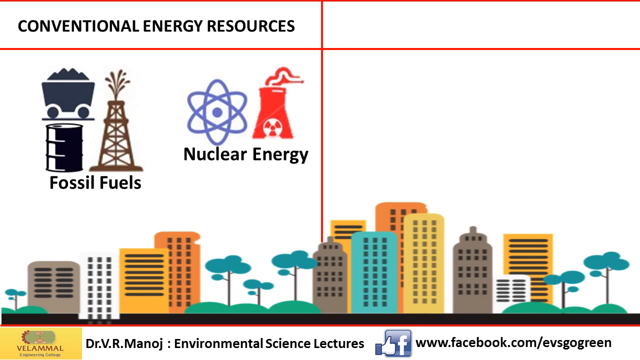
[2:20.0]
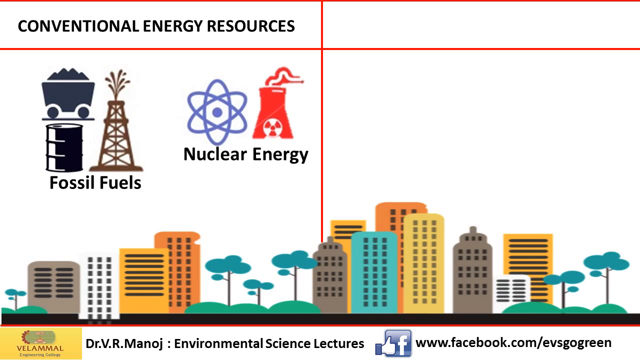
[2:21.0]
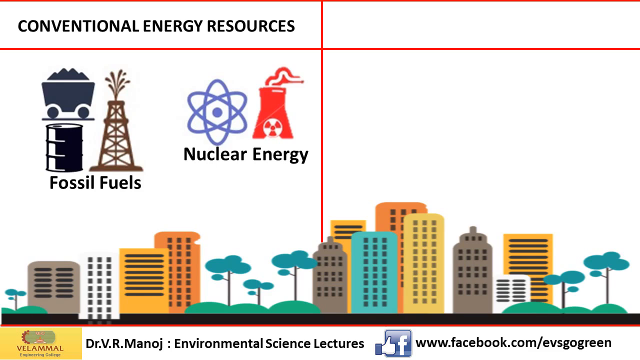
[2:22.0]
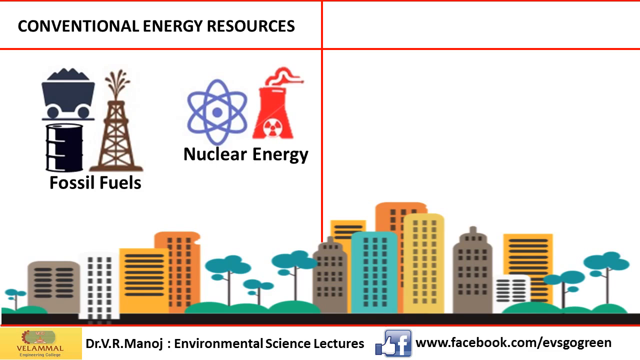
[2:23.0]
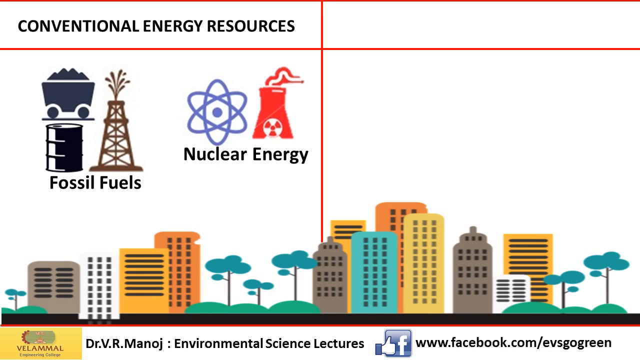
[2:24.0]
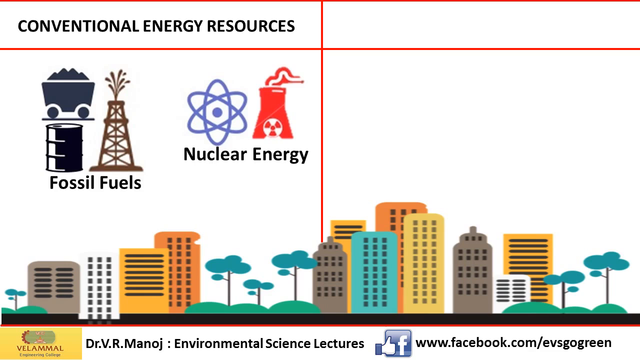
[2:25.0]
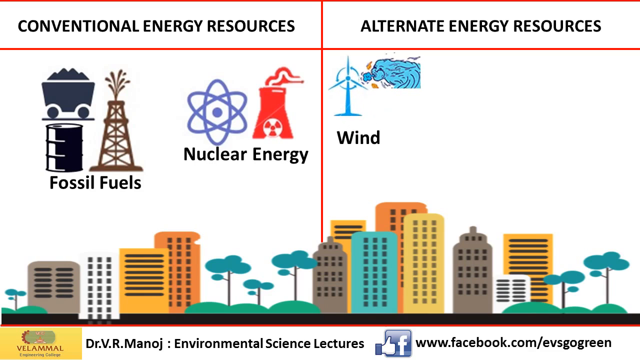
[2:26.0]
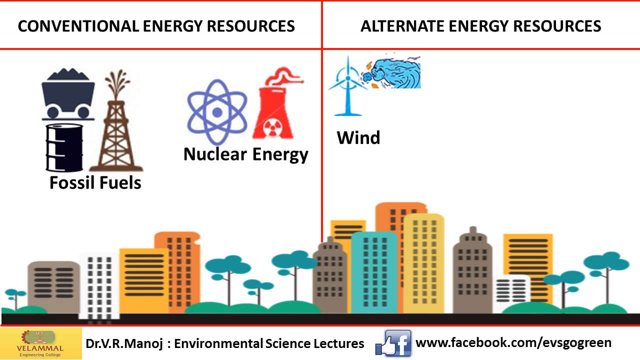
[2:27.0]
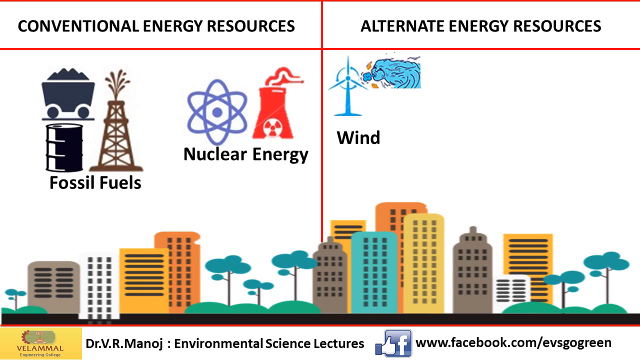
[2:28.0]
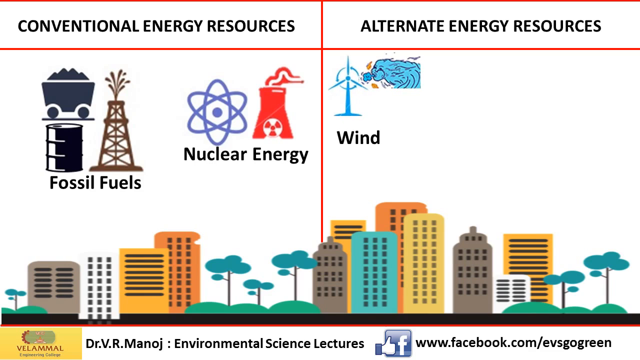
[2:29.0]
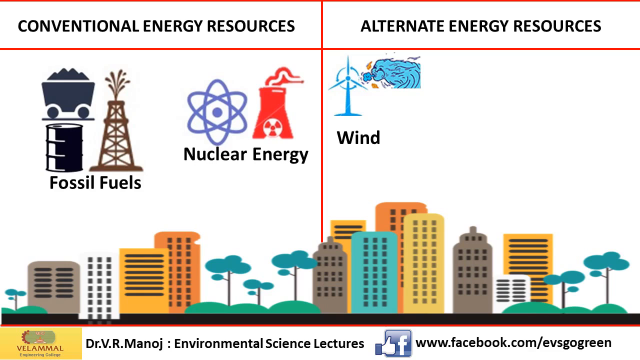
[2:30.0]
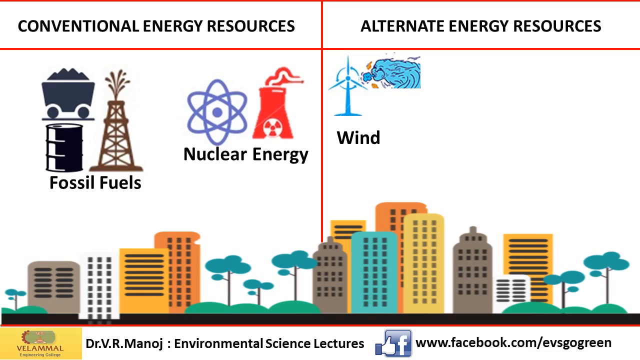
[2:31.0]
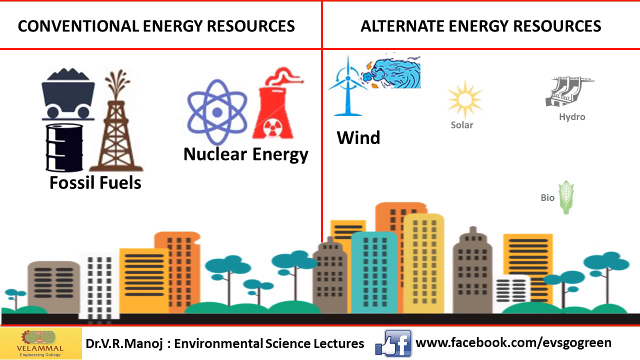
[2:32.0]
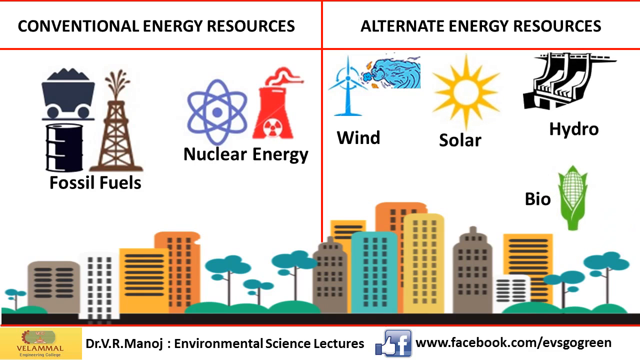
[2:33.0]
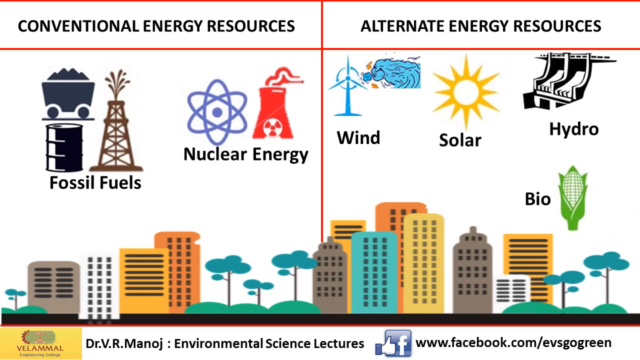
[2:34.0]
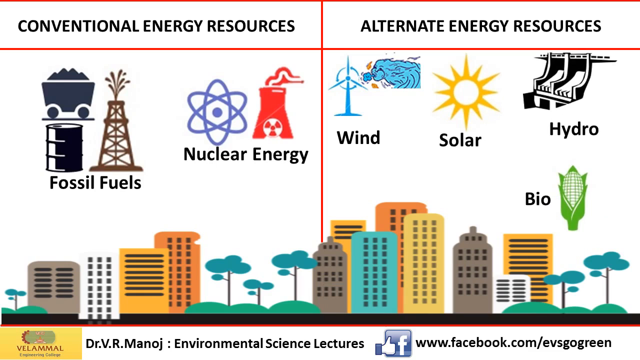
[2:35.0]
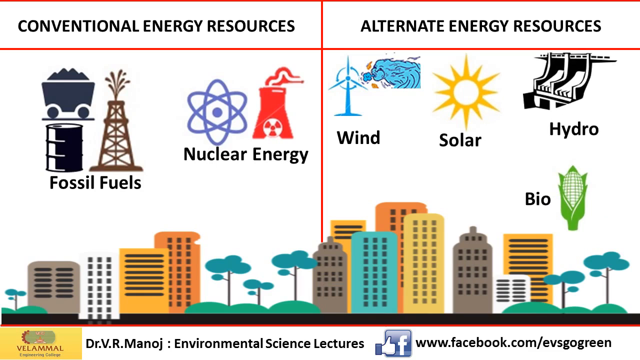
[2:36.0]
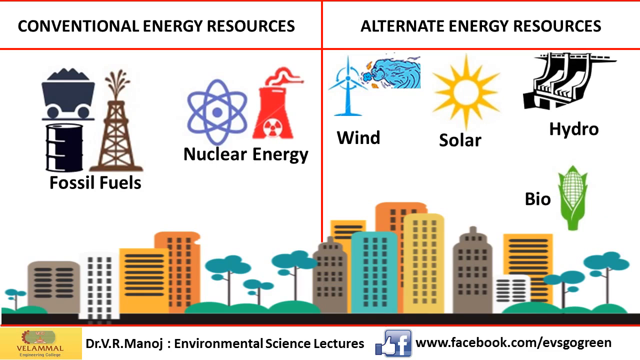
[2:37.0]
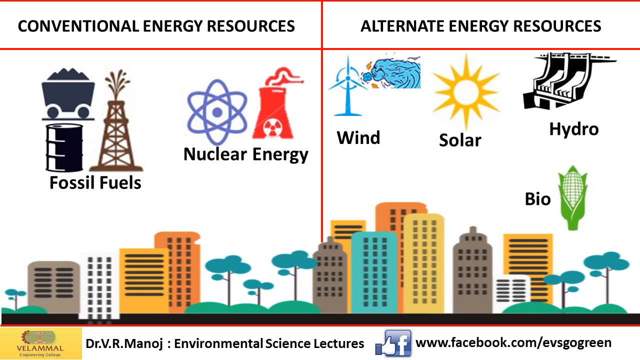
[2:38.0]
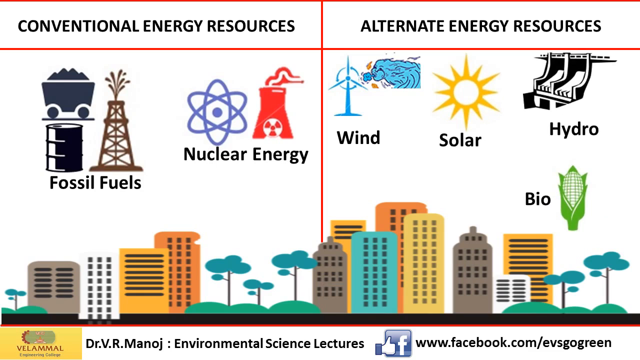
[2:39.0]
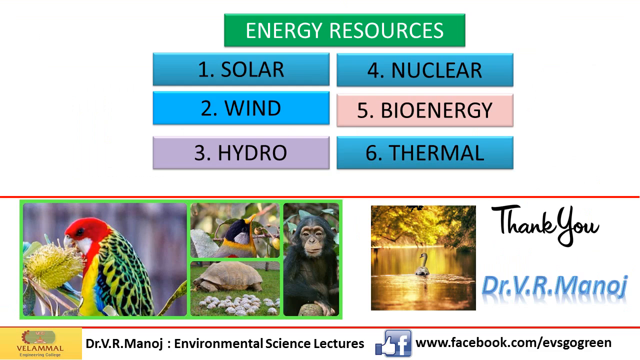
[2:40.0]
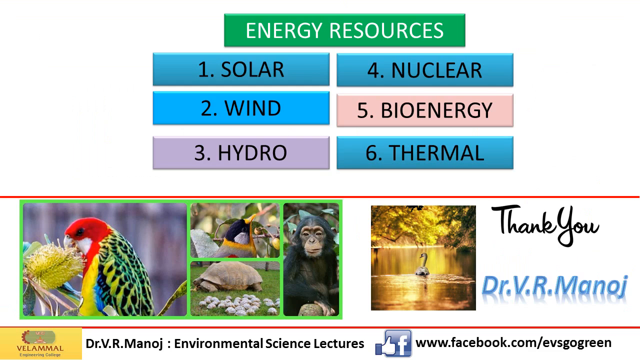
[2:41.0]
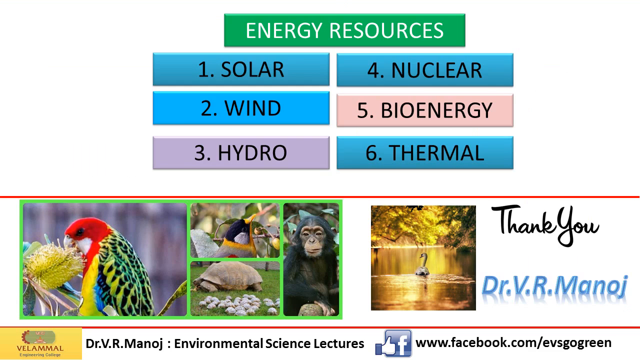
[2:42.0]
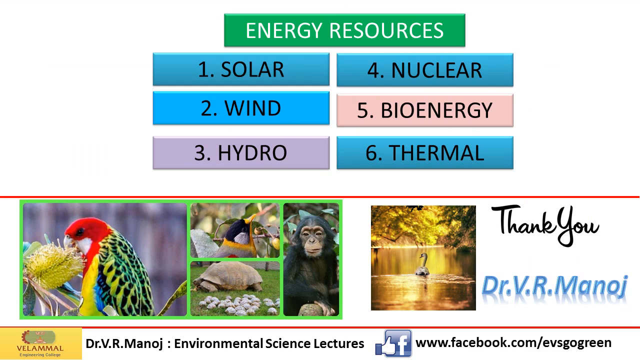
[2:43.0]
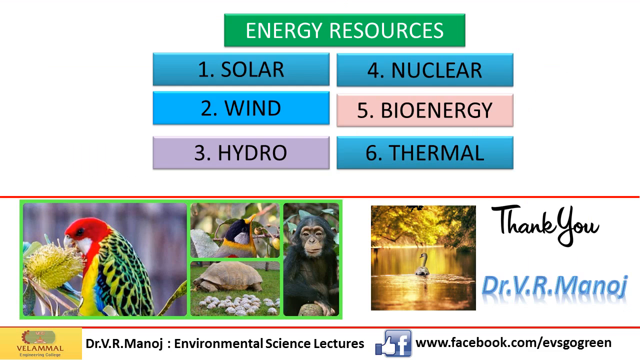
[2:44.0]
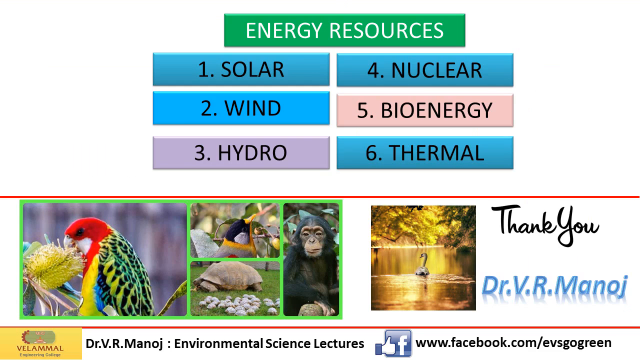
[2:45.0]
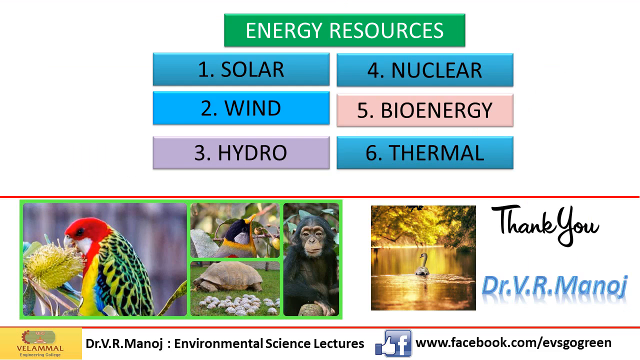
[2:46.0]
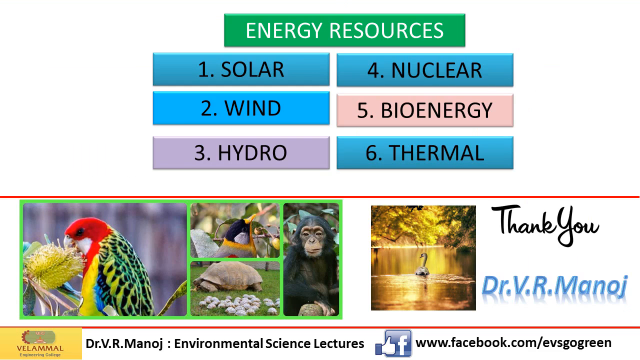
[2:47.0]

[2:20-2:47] The instructor's name, Dr. B. R. Manoj, and the college information for Balammal Engineering College appear at the bottom of the video. A brightly colored illustration of energy resources shows a city skyscraper line. Across the top, from left to right, is a box for "conventional energy resources" with icons such as fossil fuels and nuclear energy, and to its right another box, "alternate energy resources", also with icons: a windmill for wind energy with a woman blowing air out of her mouth, a sun icon in the center with "solar" written beneath it in black text, followed by "hydro", and beneath that a green corn-on-the-cob icon with the word "bio" on the left in bold black text. The video wraps up with a numbered listing of energy resources from left to right: solar, wind, hydro, nuclear, bioenergy and thermal. At the bottom of the screen are real color photos of animals: a bright parrot on the left, a chimpanzee, and a swan in a lake. In the lower right corner, black text reads "thank you" and blue text reads "Dr. Manoj".